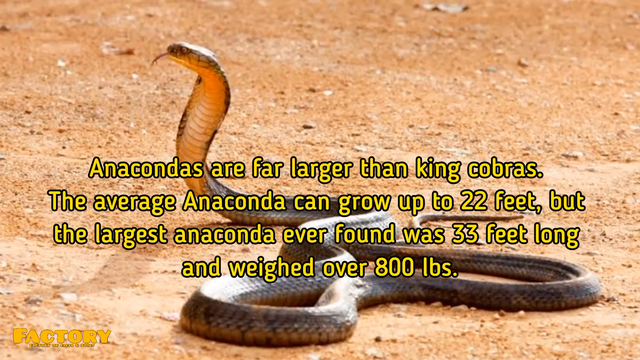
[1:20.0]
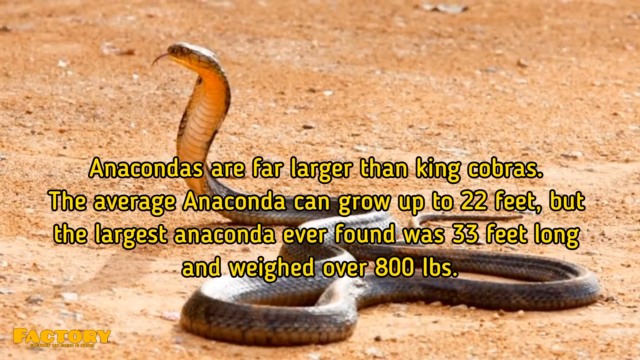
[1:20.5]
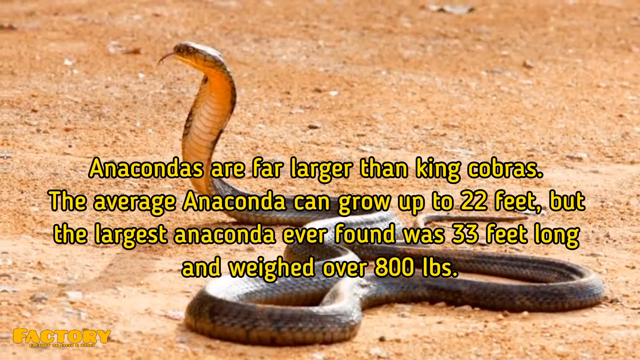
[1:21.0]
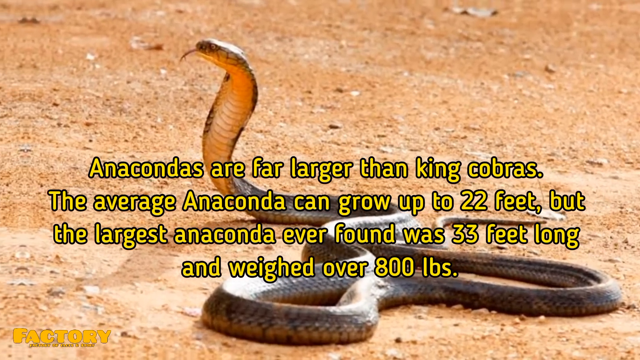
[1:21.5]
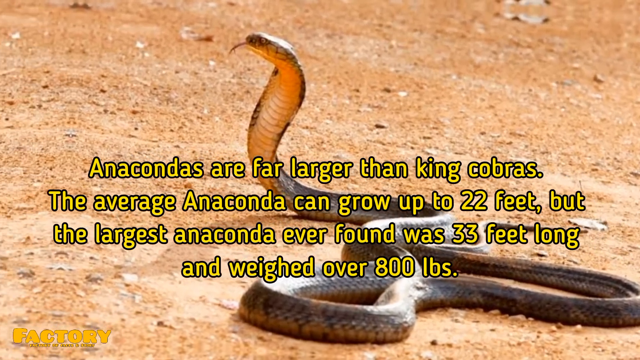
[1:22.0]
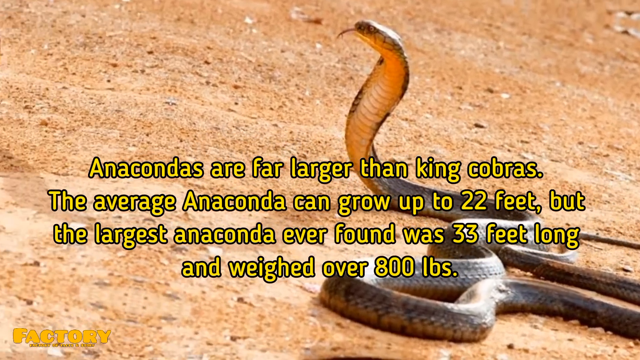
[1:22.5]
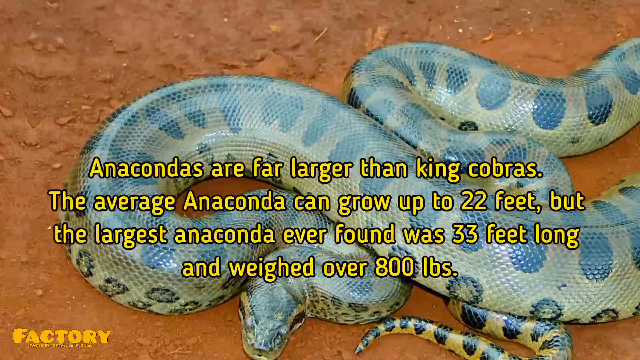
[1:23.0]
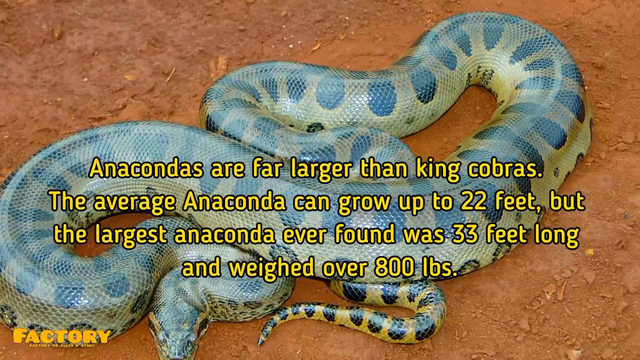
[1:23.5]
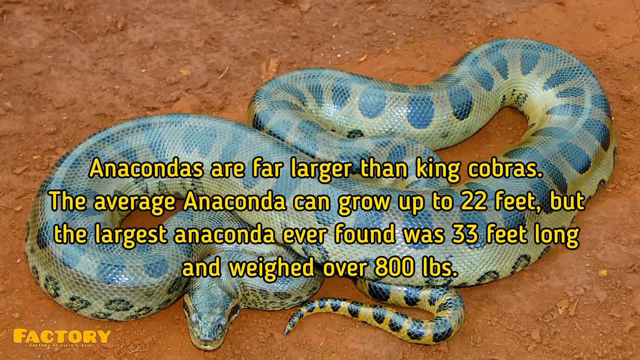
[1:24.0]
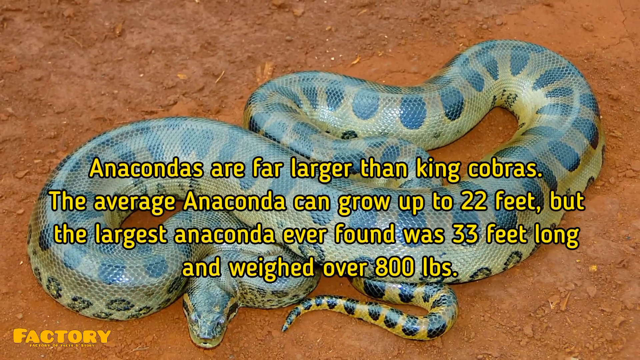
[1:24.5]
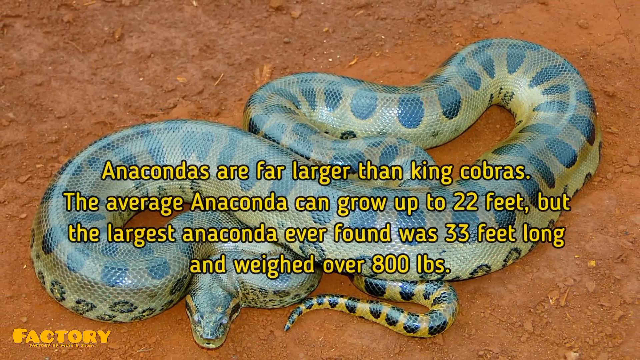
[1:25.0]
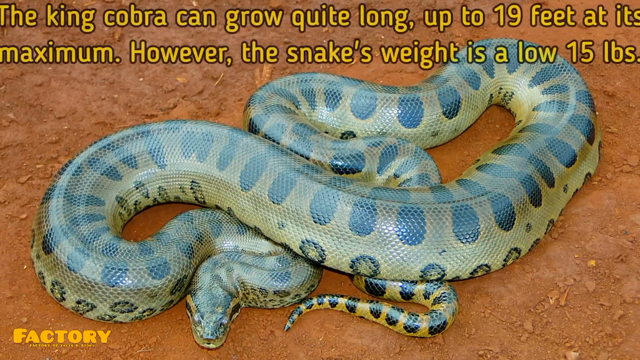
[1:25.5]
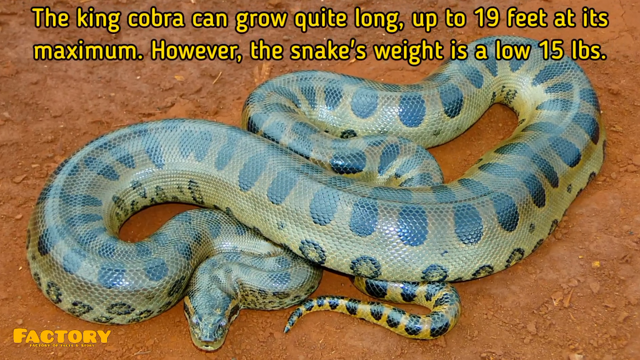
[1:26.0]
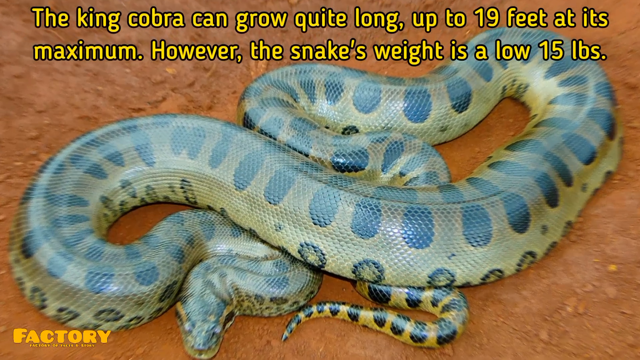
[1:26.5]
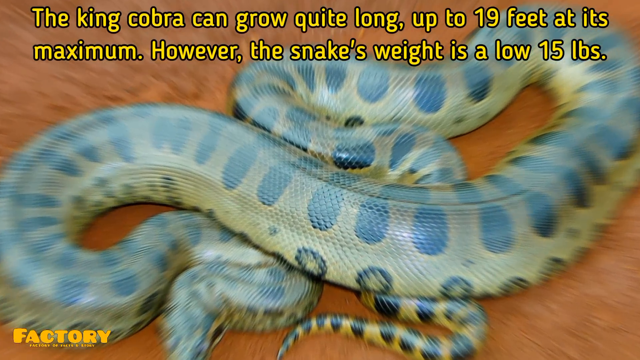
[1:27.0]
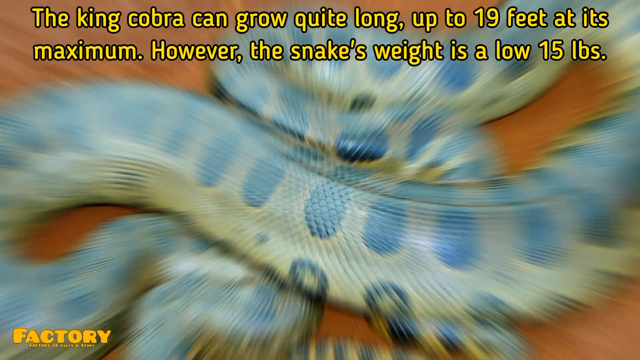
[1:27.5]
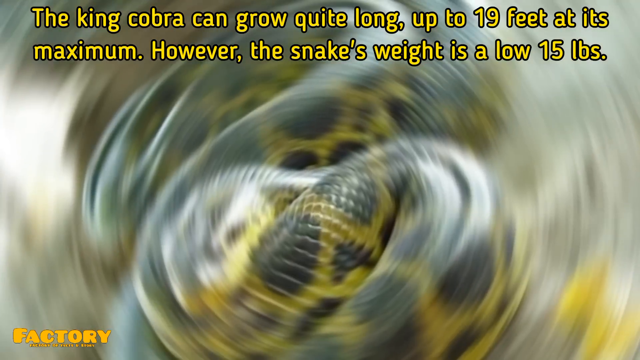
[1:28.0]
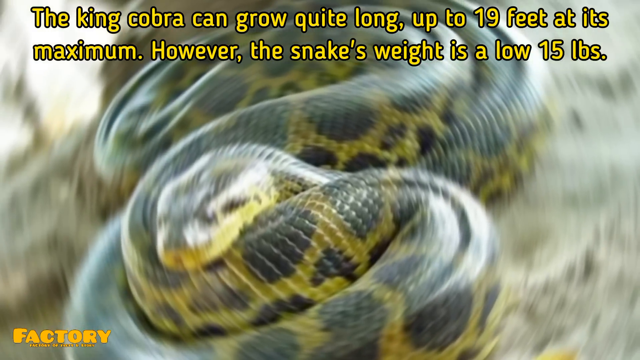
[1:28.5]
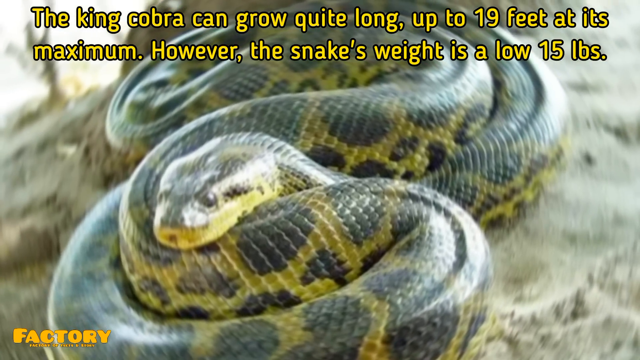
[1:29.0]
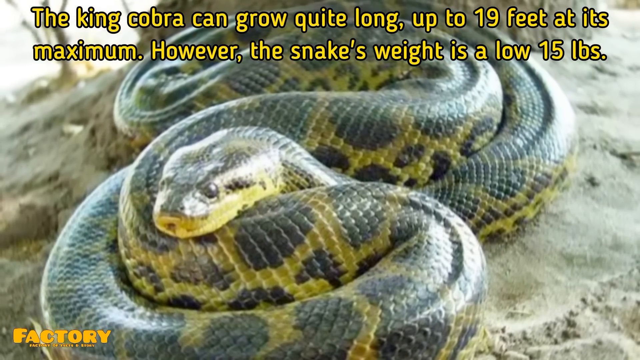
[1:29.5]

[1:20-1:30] Text reads "anacondas are far larger than king cobras. The average anaconda can grow to 22 feet but the largest anaconda ever found was 33 feet long and weighed over 800 pounds." The scene changes to an overhead view of a very large anaconda, sort of greenish with large oval black shapes. Text in the top half reads "the king cobra can grow quite long, up to 19 feet at its maximum. However, its weight is as low as 15 pounds." The scene changes to a different anaconda, more greenish with little bits of black, looking to the left of the video. This anaconda is wrapped around itself and sitting on a sort of very light brownish dirt area.